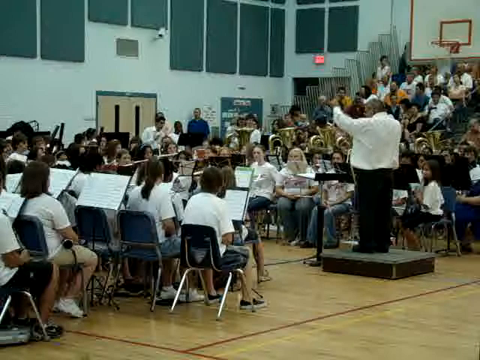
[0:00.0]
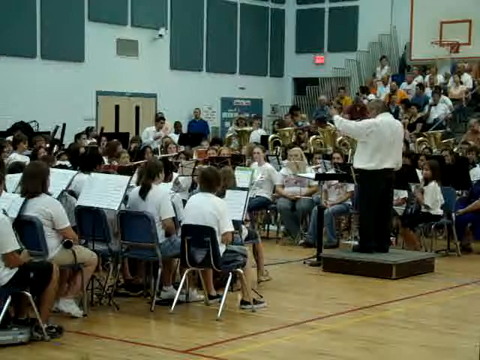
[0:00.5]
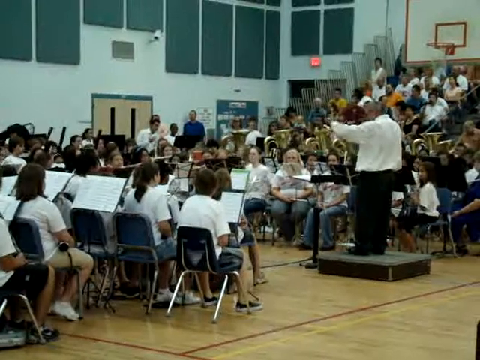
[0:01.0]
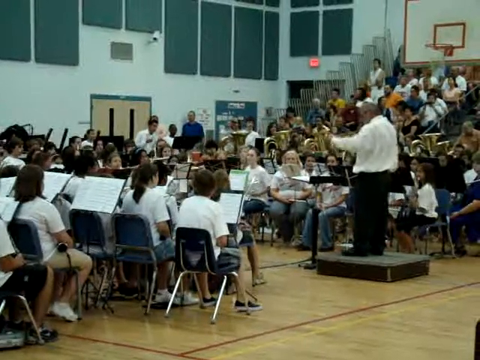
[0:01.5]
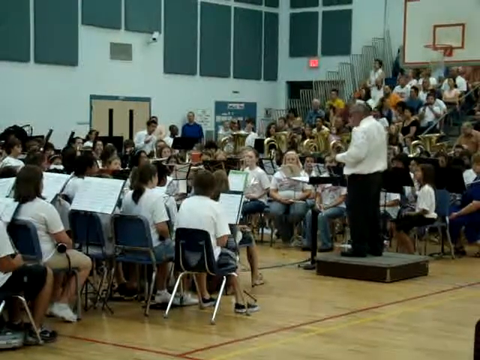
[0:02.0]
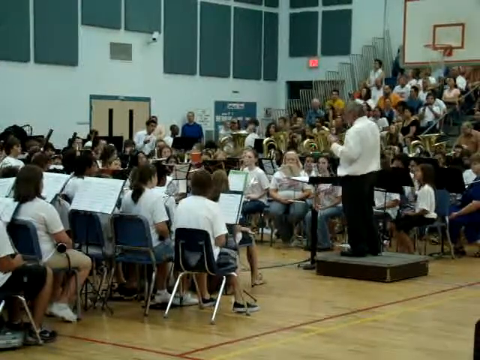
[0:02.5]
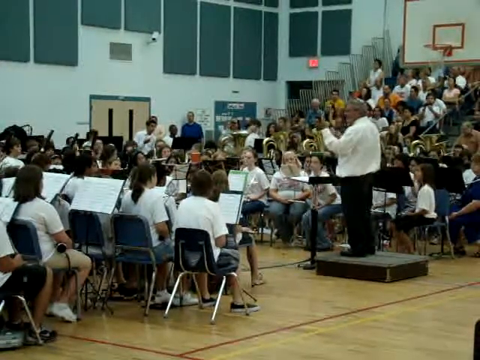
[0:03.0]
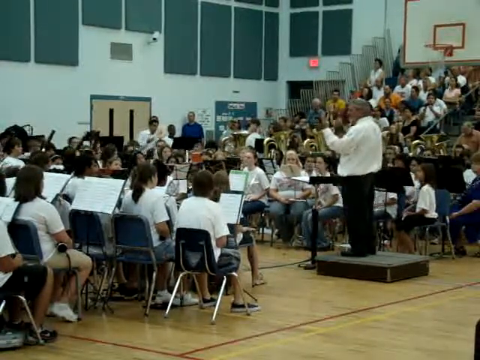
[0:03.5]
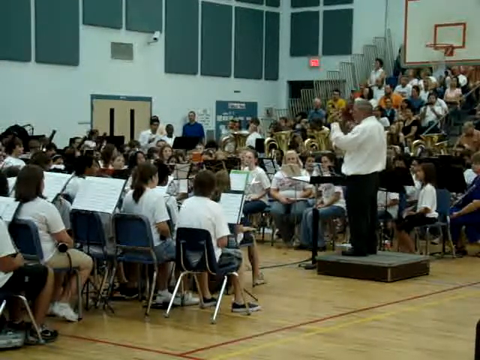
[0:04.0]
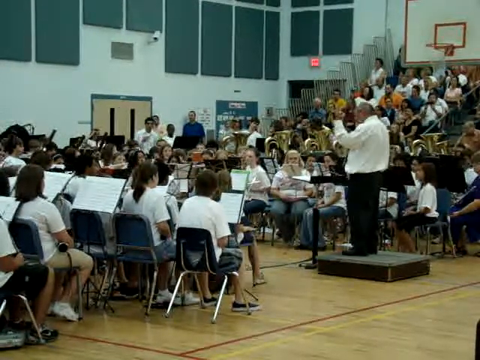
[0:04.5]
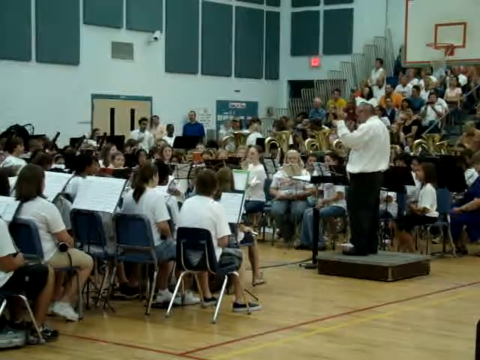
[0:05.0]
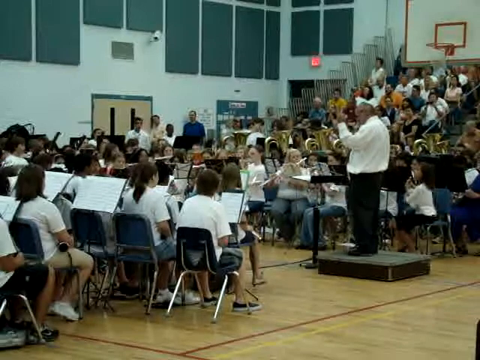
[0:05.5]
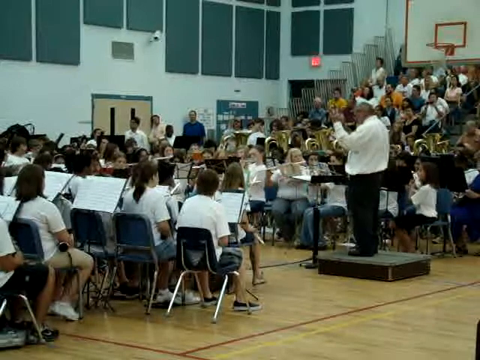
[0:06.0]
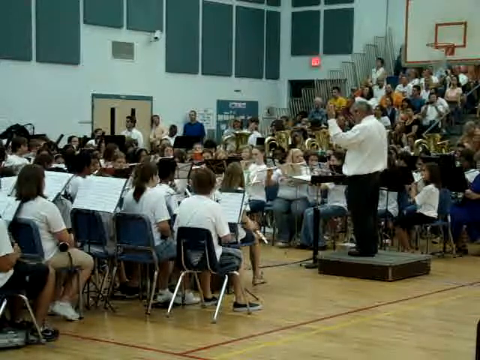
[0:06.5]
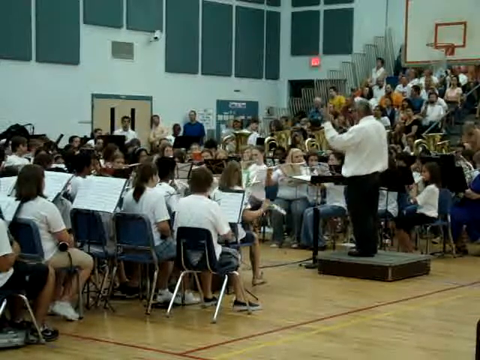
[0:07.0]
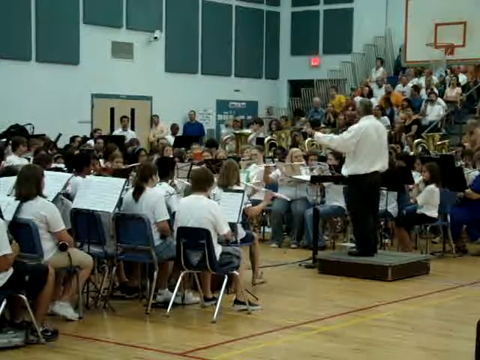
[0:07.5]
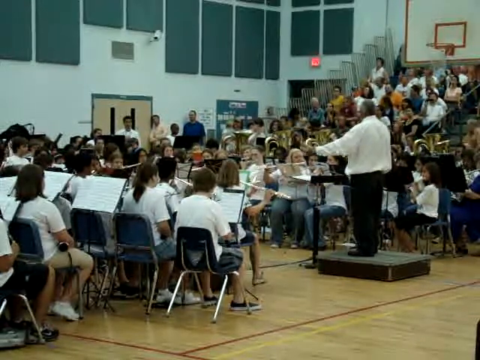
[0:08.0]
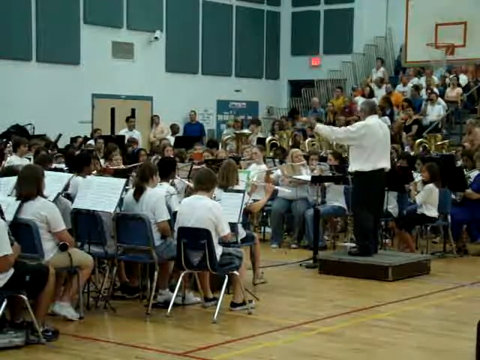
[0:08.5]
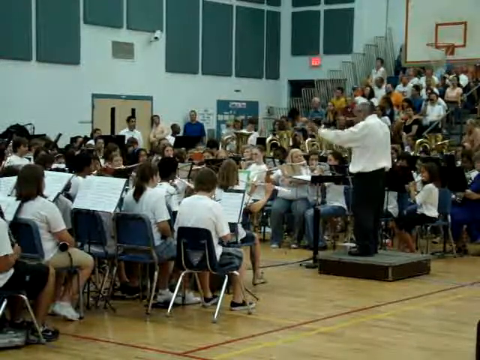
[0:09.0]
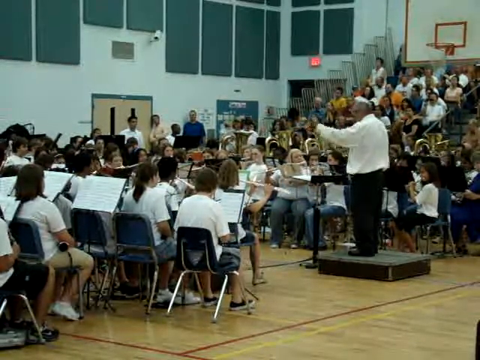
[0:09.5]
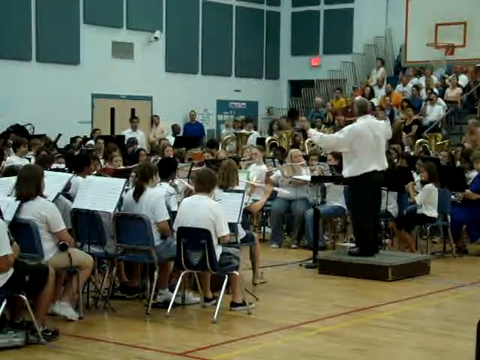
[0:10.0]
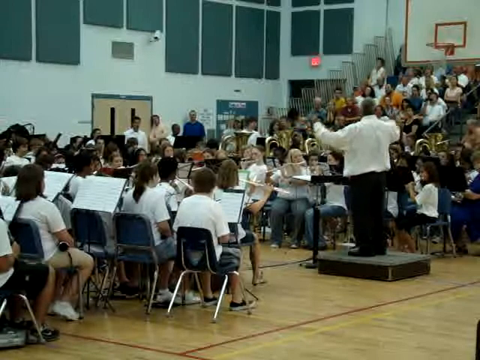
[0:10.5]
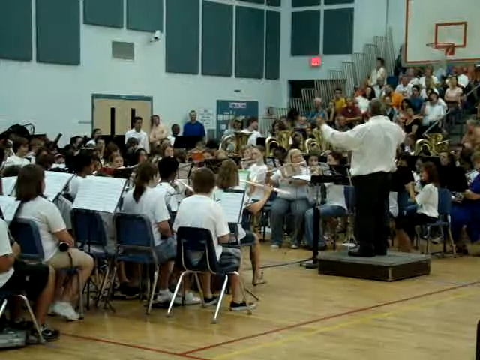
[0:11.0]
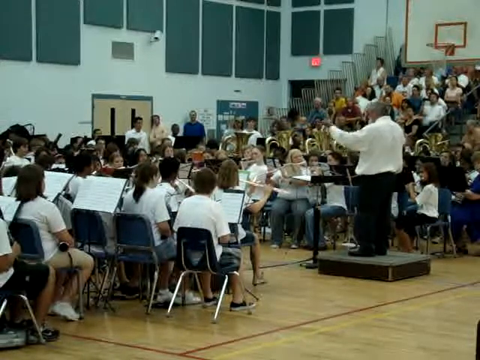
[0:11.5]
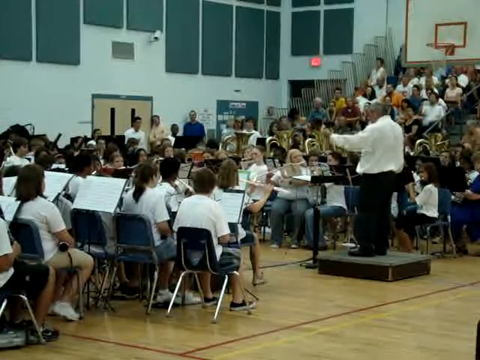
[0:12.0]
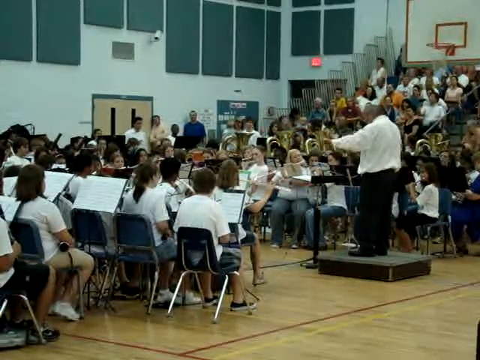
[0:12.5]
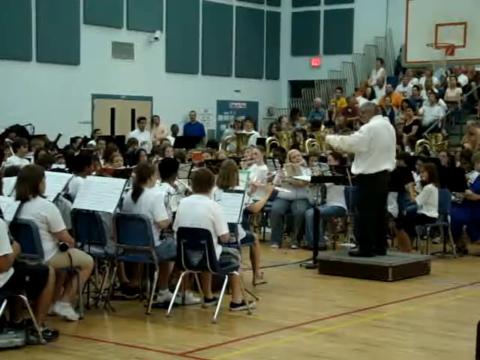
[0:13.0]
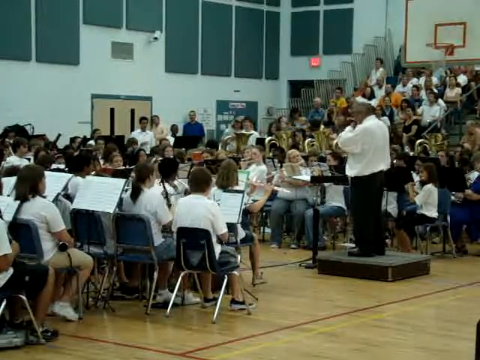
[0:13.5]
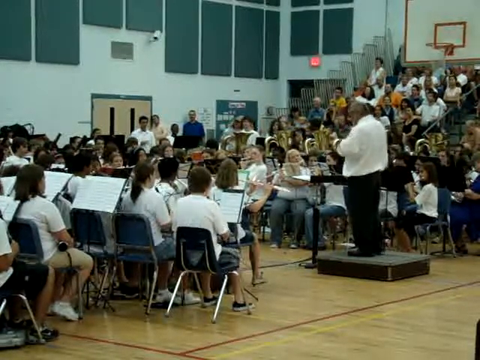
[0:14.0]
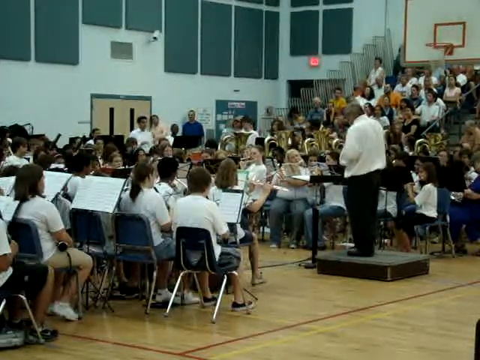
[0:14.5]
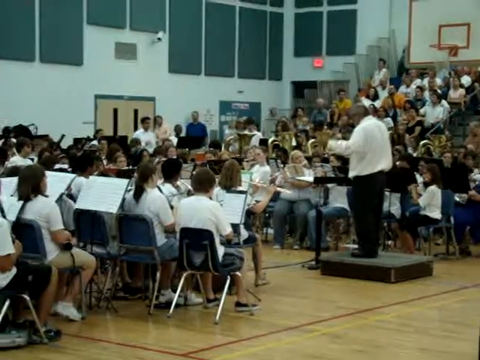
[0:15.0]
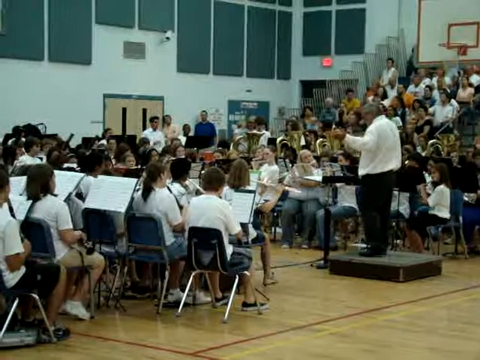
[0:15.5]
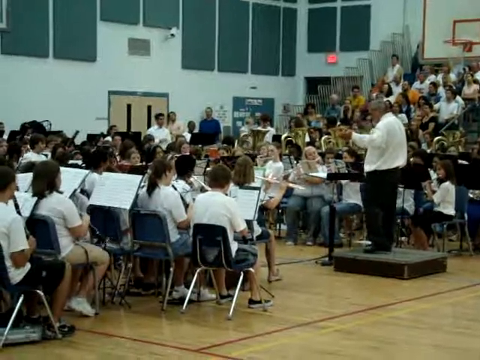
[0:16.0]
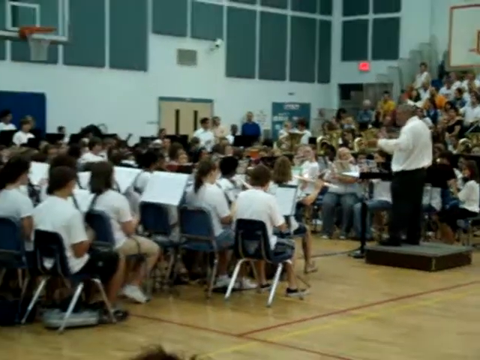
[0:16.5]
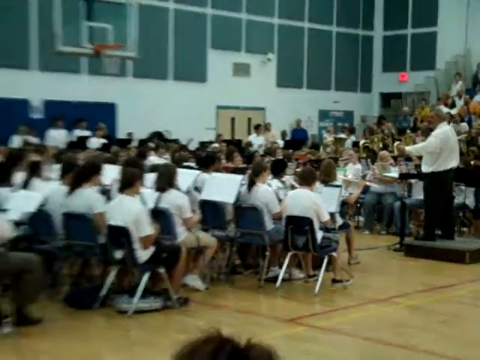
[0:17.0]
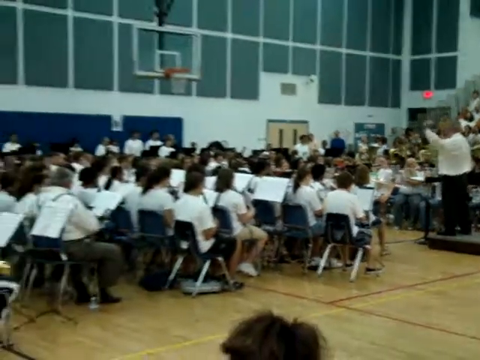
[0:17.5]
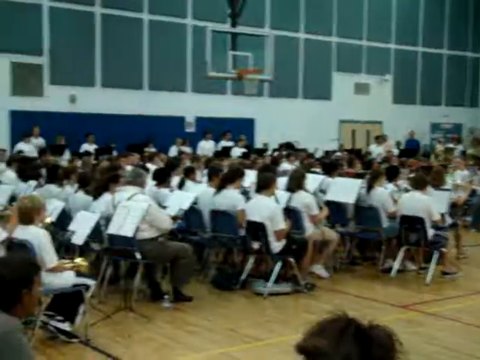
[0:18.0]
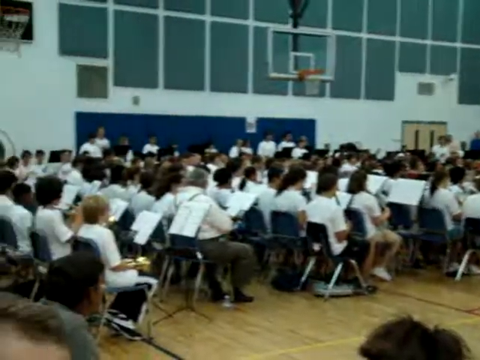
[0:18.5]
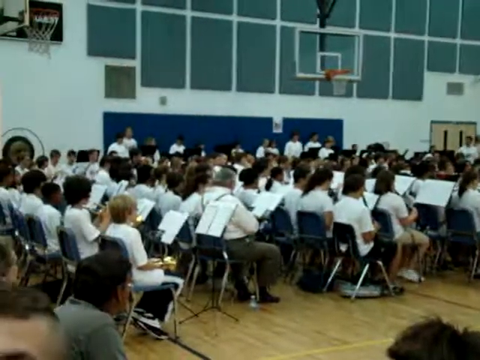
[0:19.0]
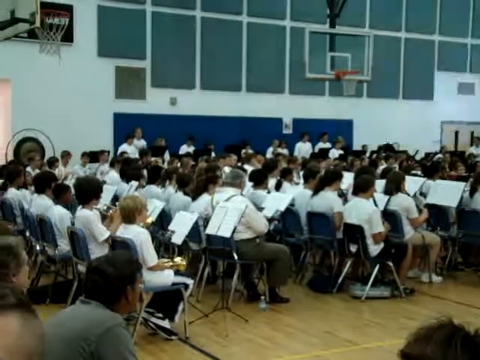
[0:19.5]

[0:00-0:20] What looks like a group of kids is apparently in a gym. They sit in a row of blue chairs, looking at music sheets on a stand. A heavyset man in a long-sleeve white shirt and long black pants looks like he is assisting them with the music. In the background there is a door with a bunch of blue wall hangings, and a white camera is recording all of them. An exit sign is visible in the distance, a basketball hoop hovers in the air, and a bunch of people sit in a stadium-type area, watching. The man in white and black moves around, kind of like he is orchestrating the music. A flash shows that someone is taking pictures. All of the kids are sitting, and one of them appears to be using a flute or something like it. The camera moves slightly to the left to show some of the other children as well.